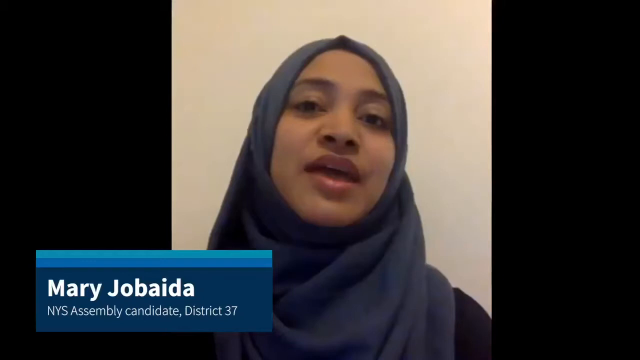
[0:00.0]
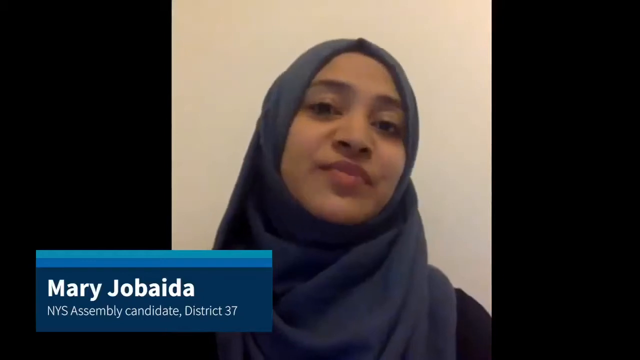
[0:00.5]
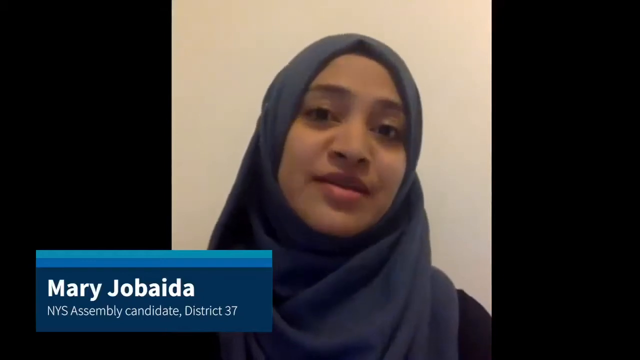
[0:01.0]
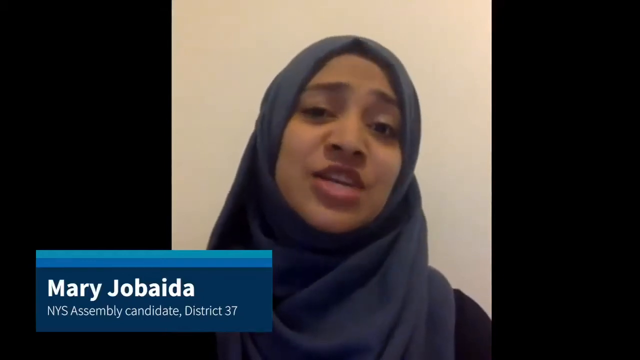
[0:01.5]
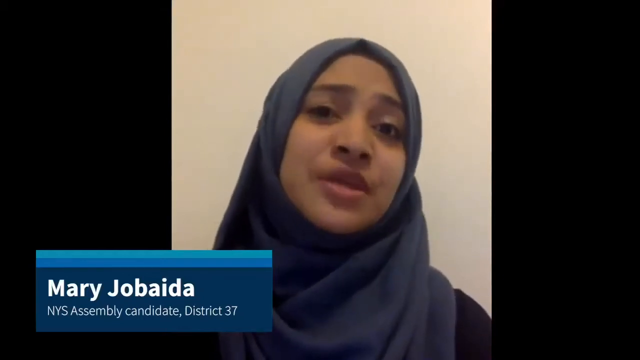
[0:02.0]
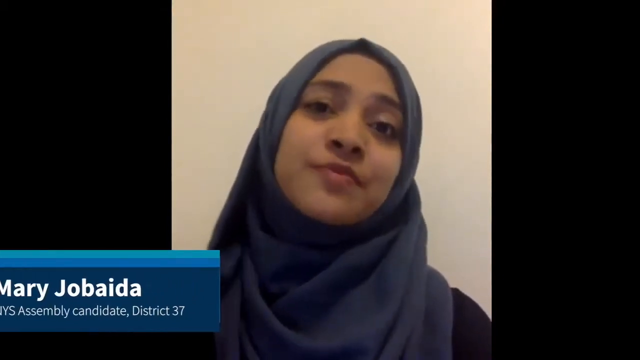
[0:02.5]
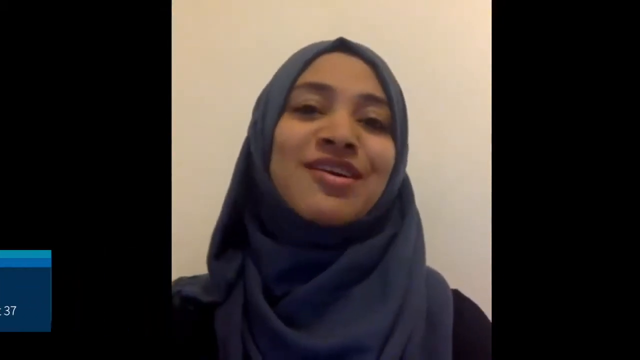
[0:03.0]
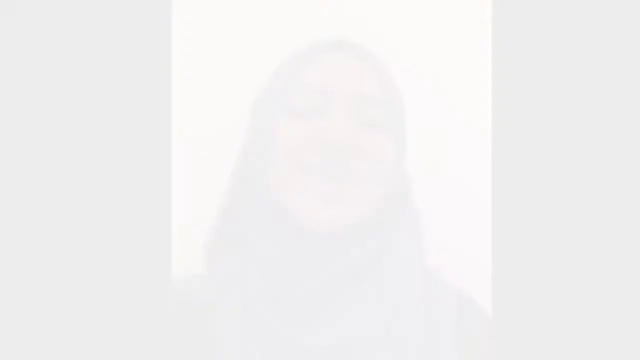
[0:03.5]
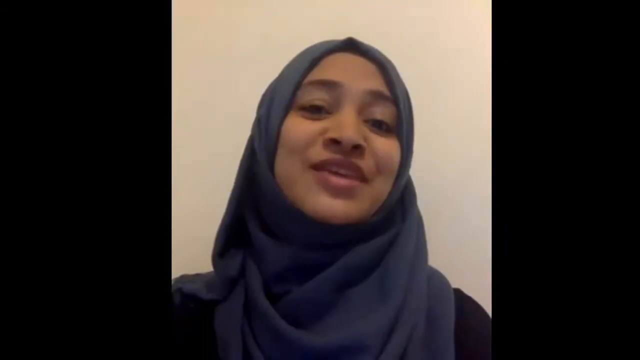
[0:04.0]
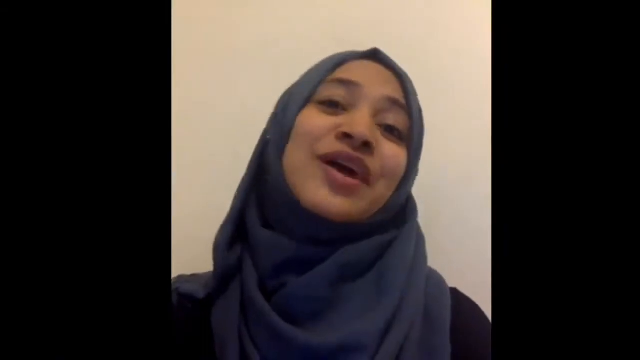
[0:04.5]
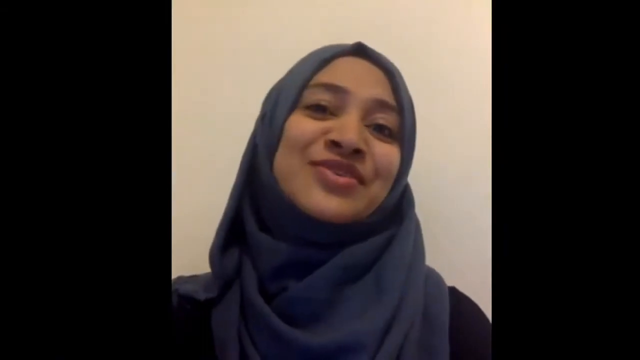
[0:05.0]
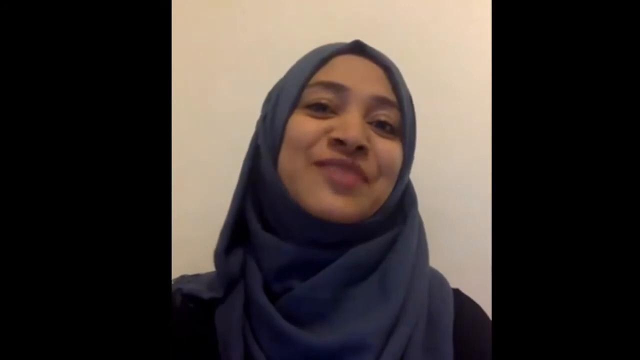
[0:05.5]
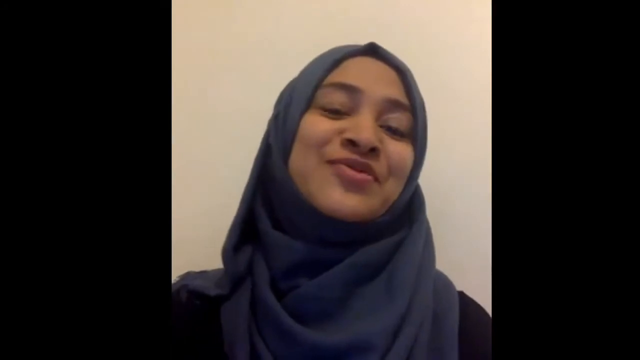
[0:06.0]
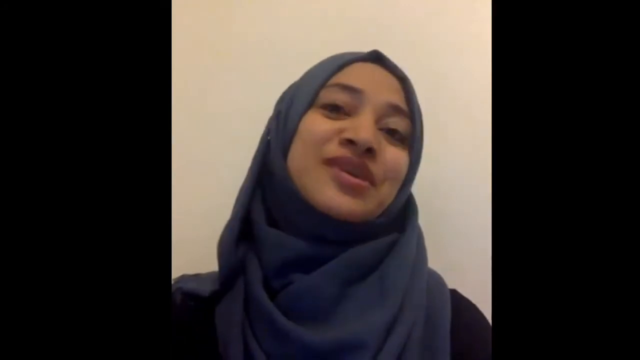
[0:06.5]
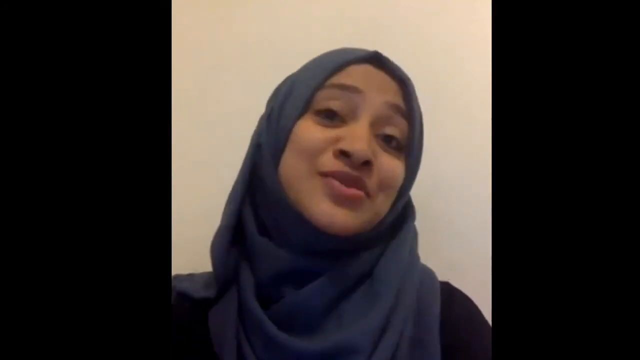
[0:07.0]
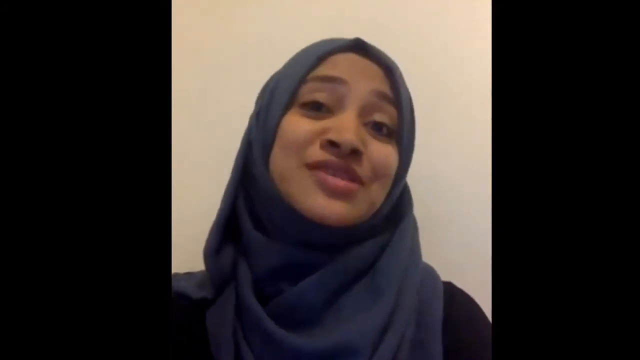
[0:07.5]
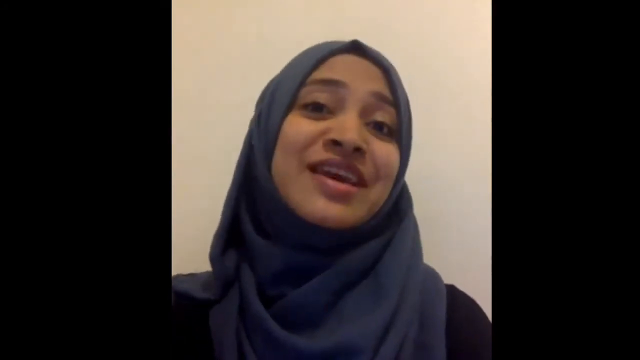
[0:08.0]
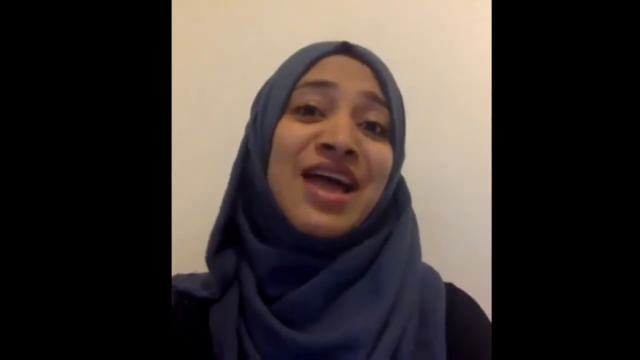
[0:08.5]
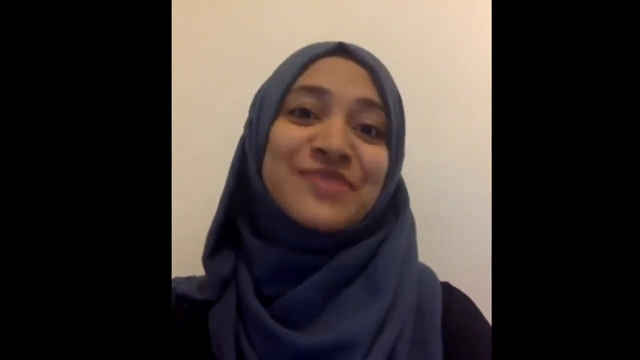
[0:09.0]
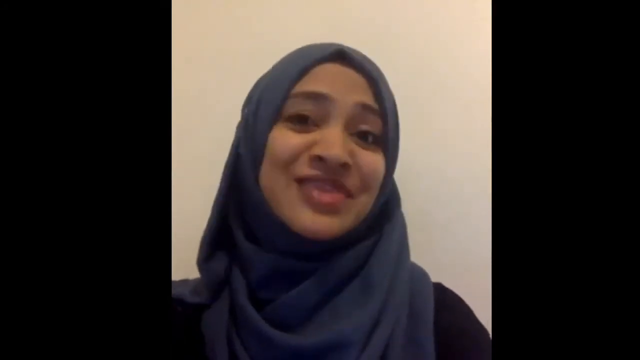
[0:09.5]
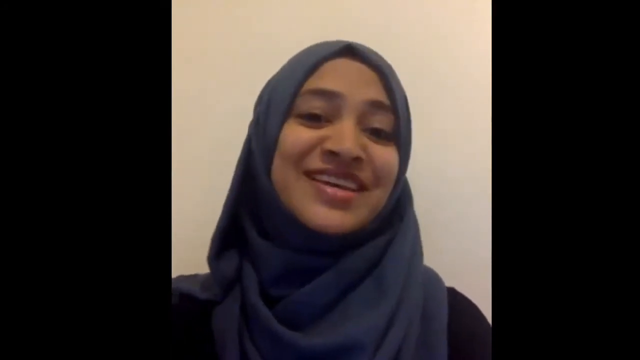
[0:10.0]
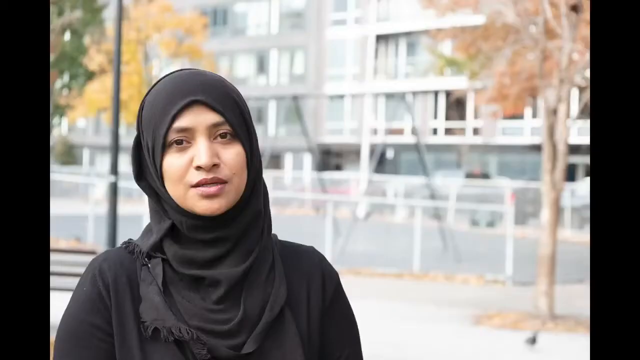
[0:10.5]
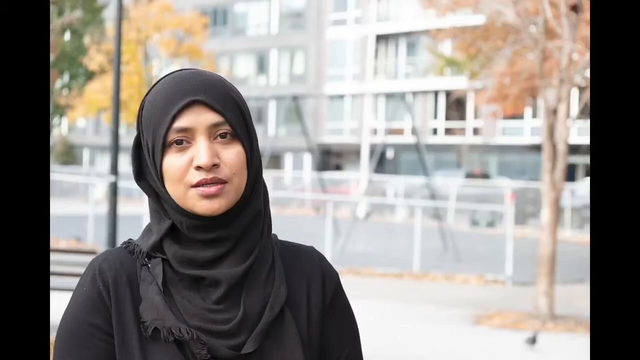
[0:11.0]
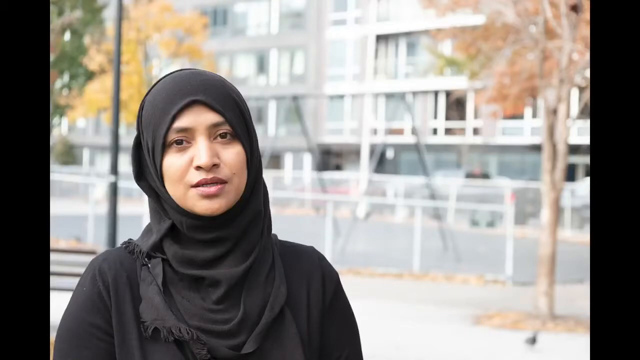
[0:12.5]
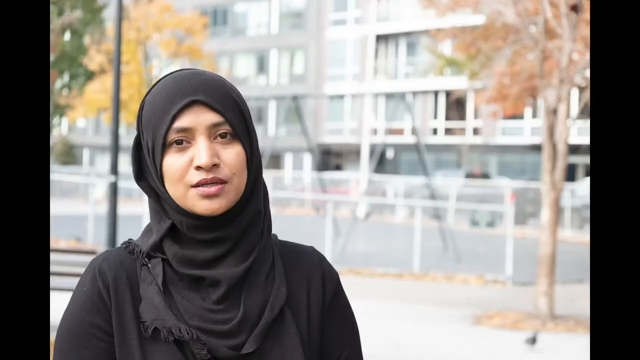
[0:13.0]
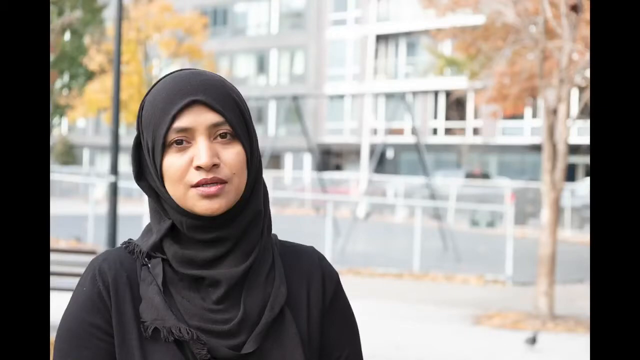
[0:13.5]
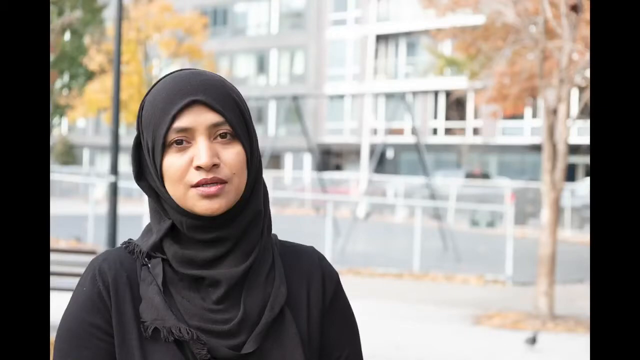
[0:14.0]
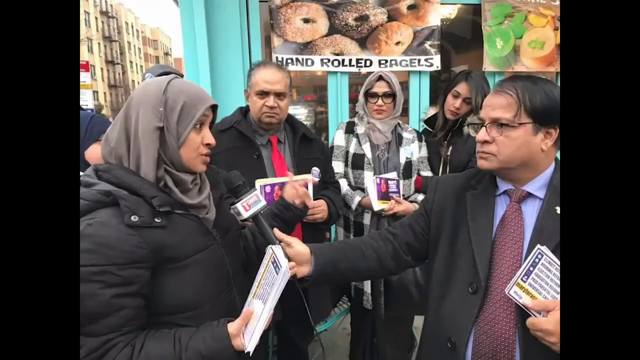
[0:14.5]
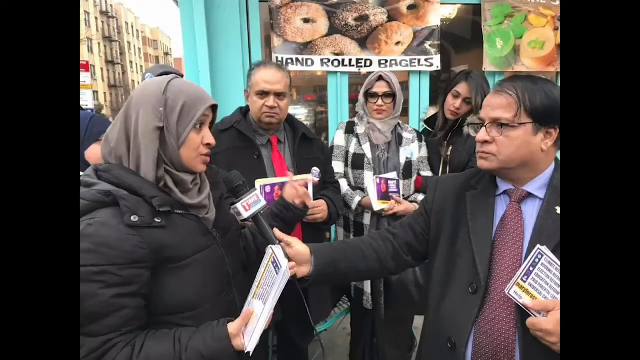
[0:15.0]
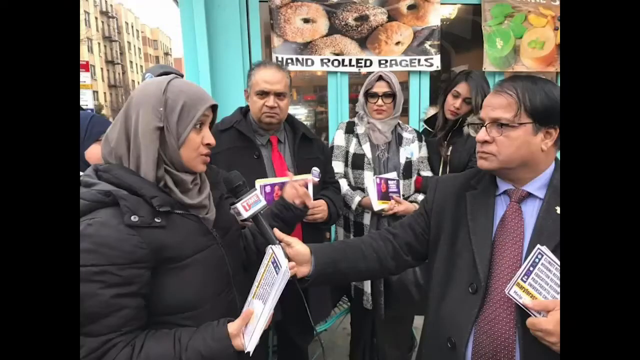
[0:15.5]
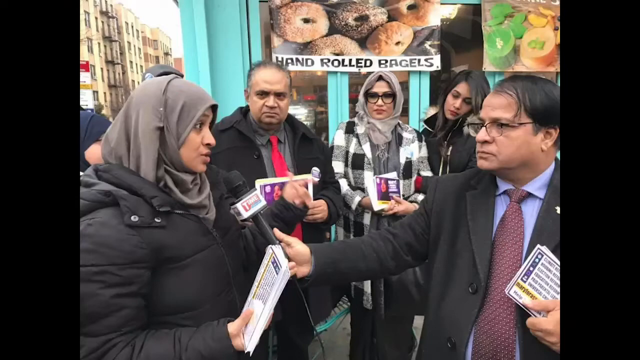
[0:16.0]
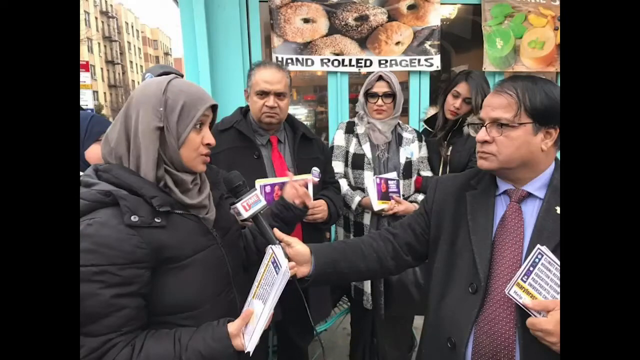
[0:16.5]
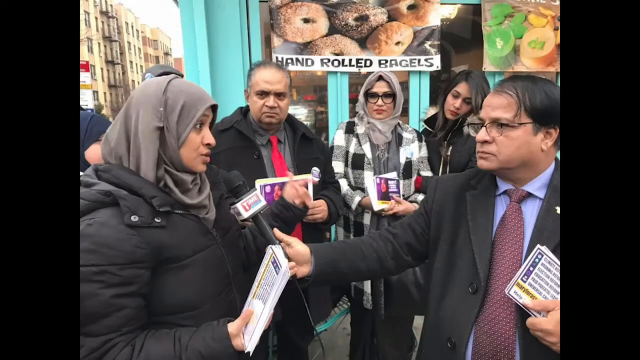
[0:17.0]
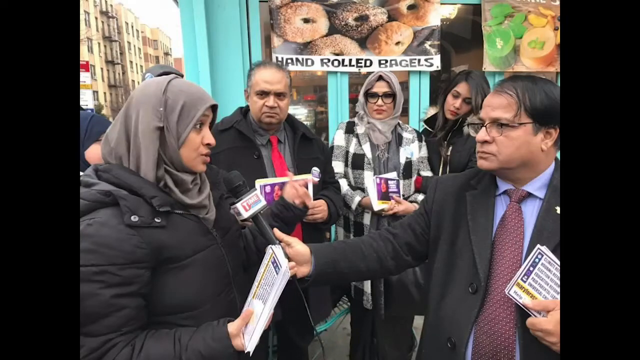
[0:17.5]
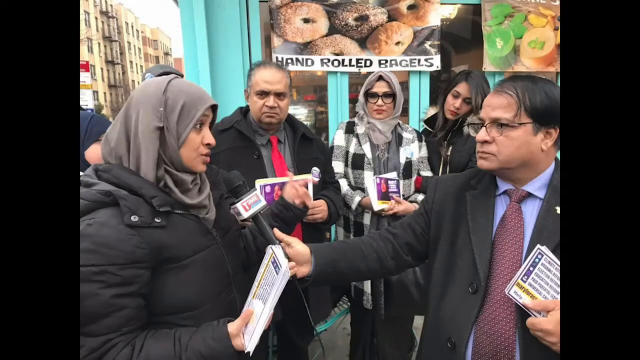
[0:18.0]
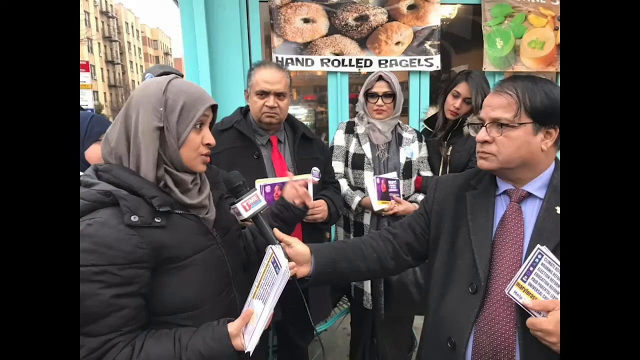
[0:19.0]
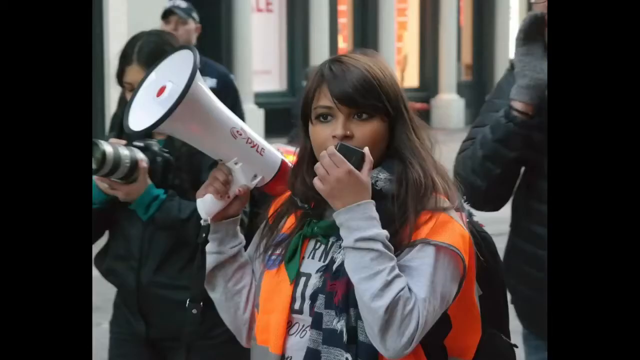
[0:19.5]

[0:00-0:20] Mary Jo Bida, wearing a black hijab, speaks at a live conference while reporters interview her. Apparently about five people are clearly visible: one holds a mic toward her and the other journalists stand and listen to what she says. Hand-rolled bagels appear at the top middle of the screen. Among the journalists there seem to be three women and one man; the journalist holding the mic to Mary wears a suit and tie, and there are some banners in her hands. After that, another image apparently shows another reporter doing the same work.